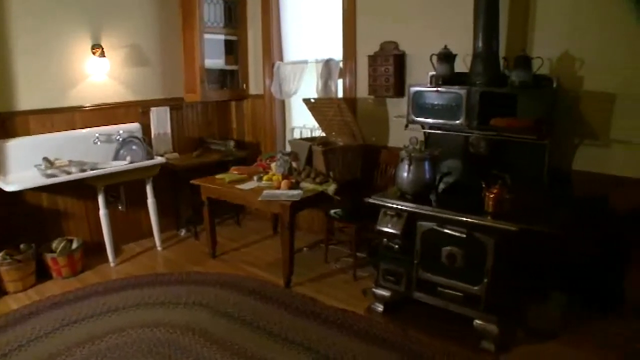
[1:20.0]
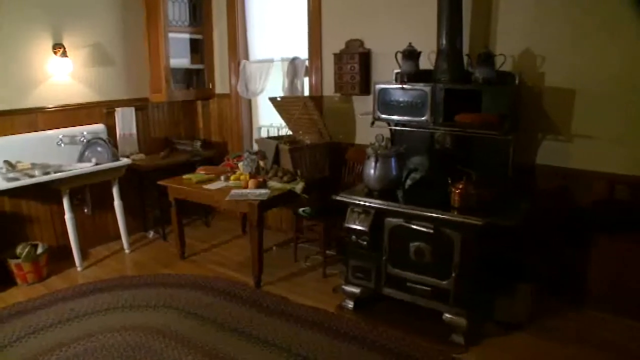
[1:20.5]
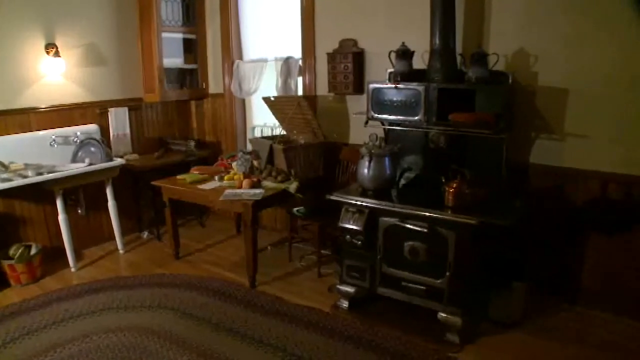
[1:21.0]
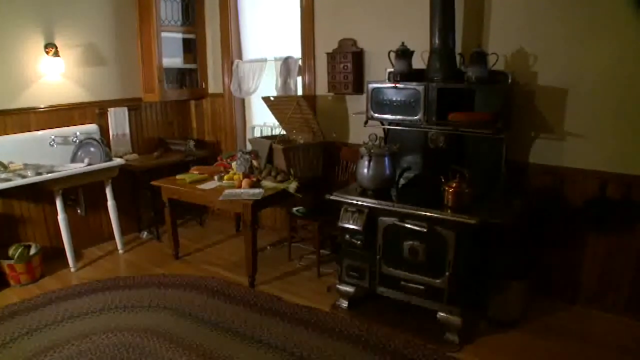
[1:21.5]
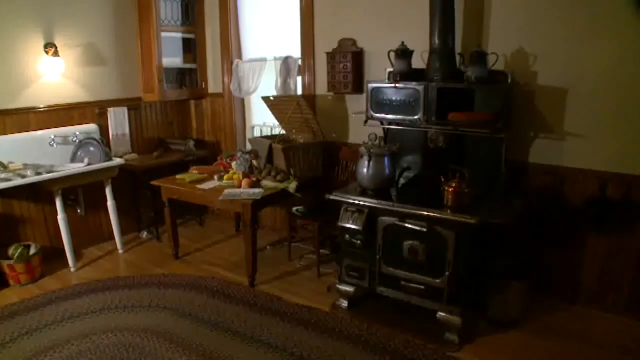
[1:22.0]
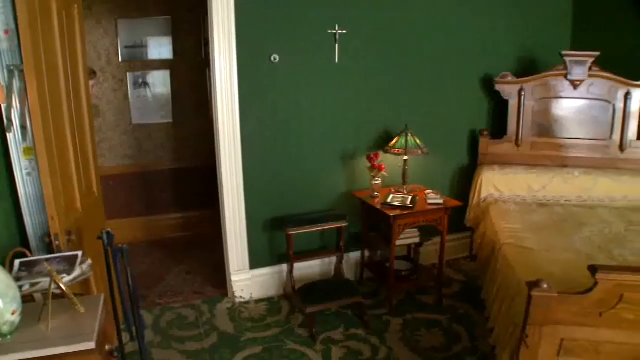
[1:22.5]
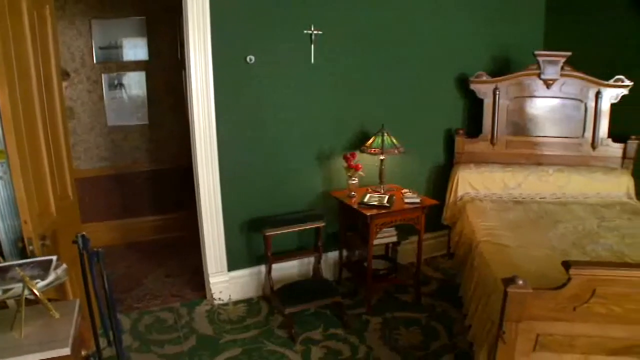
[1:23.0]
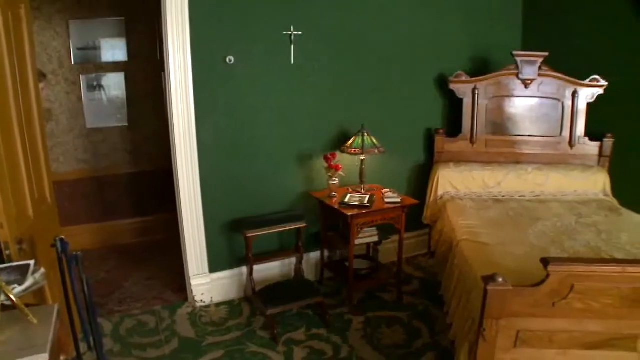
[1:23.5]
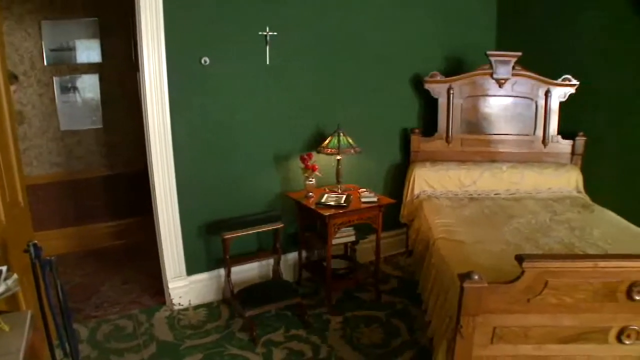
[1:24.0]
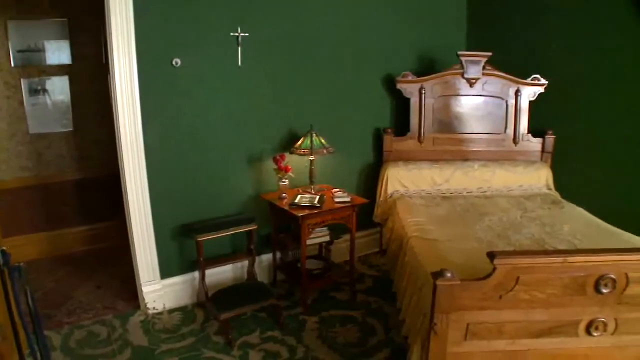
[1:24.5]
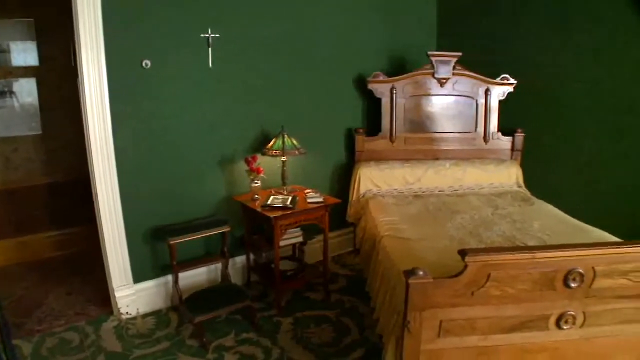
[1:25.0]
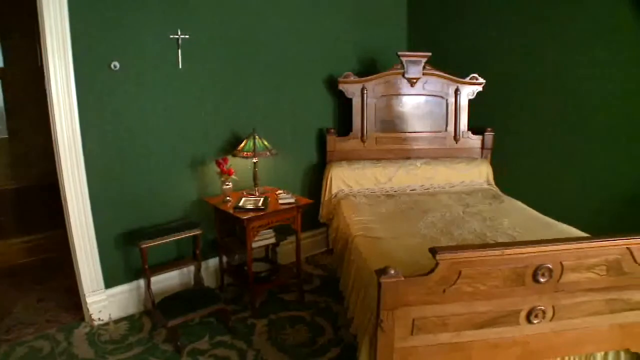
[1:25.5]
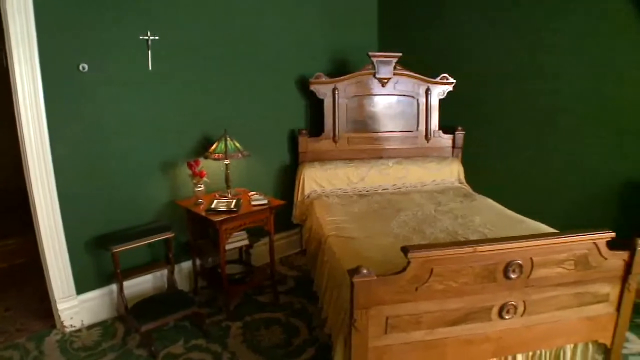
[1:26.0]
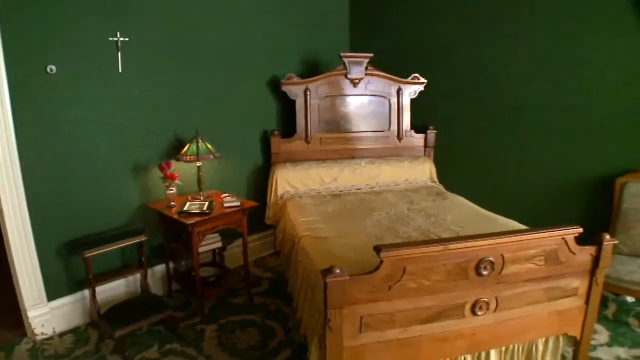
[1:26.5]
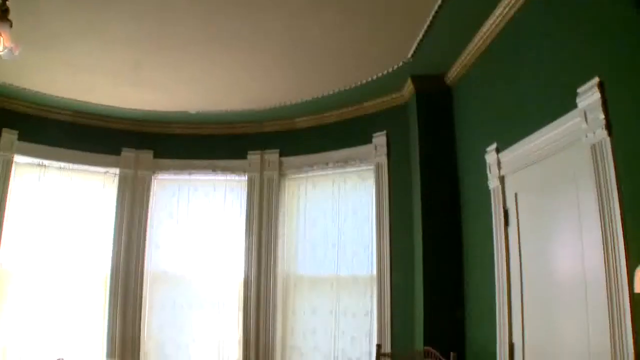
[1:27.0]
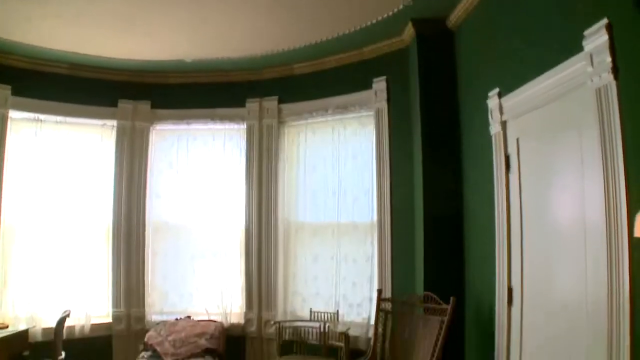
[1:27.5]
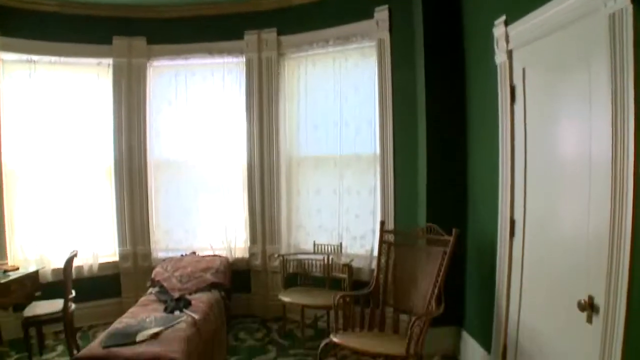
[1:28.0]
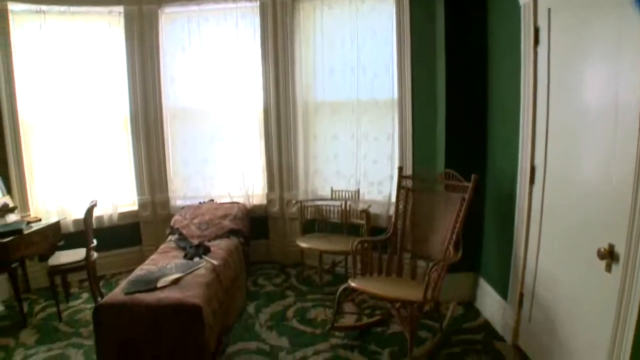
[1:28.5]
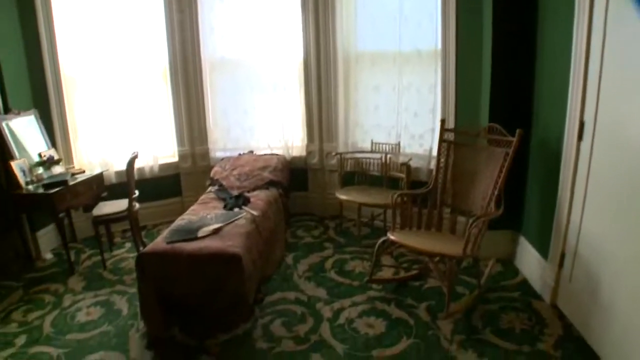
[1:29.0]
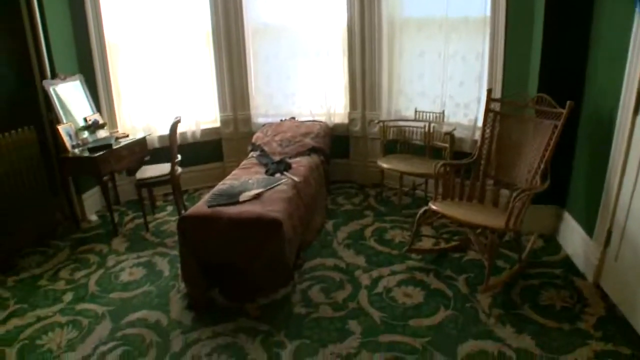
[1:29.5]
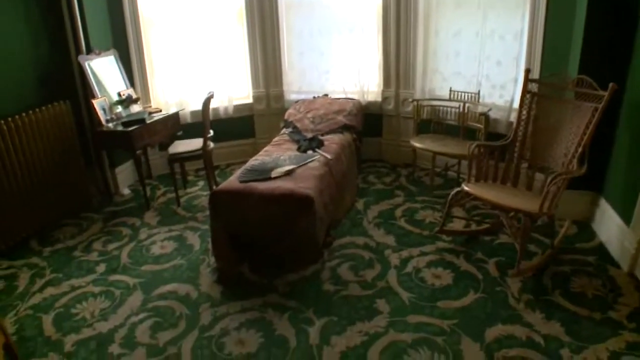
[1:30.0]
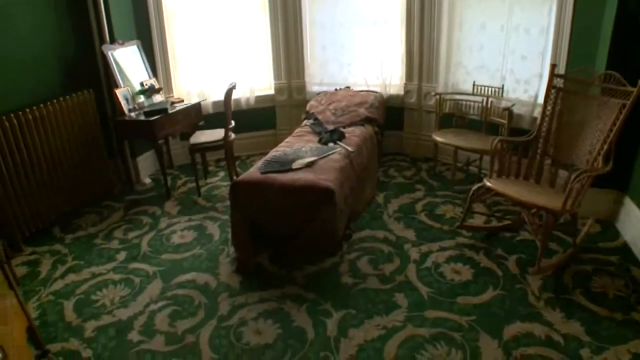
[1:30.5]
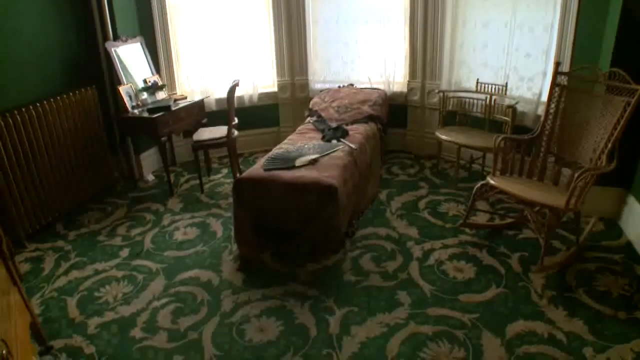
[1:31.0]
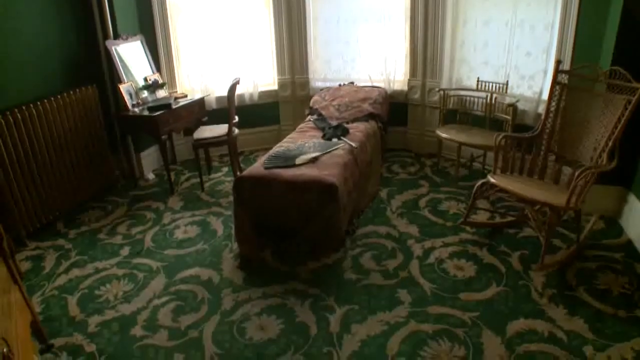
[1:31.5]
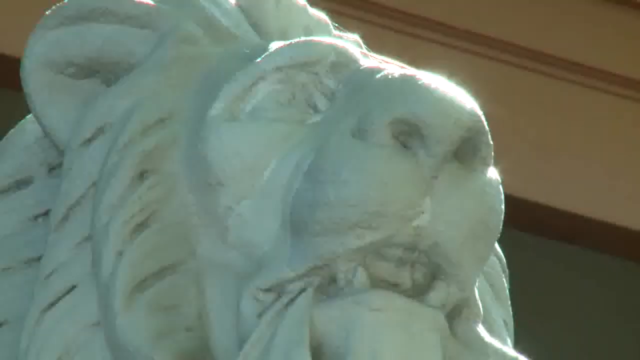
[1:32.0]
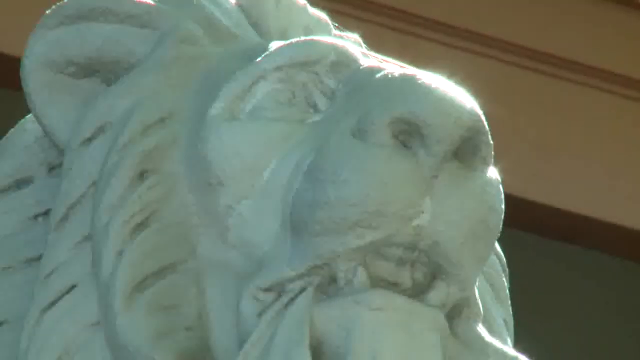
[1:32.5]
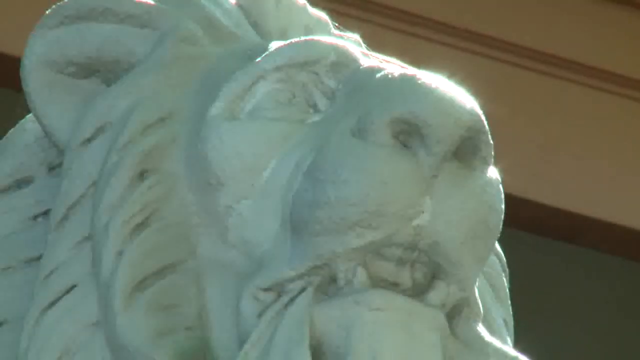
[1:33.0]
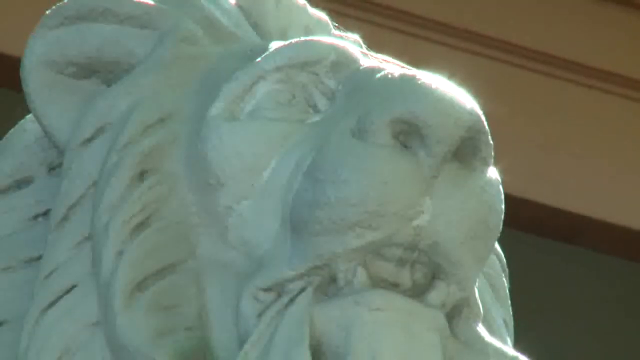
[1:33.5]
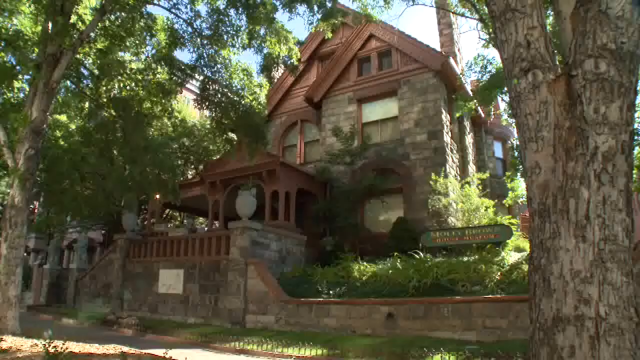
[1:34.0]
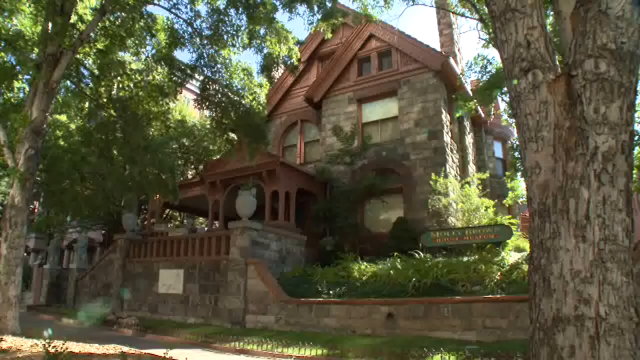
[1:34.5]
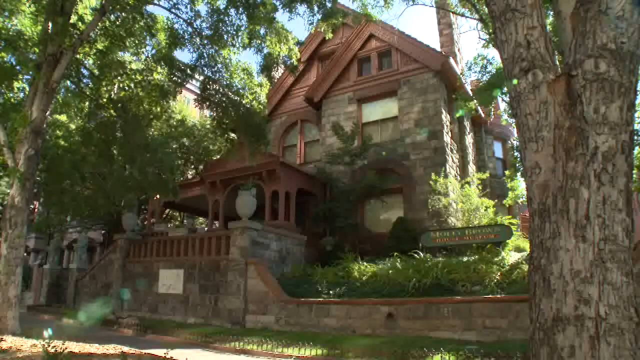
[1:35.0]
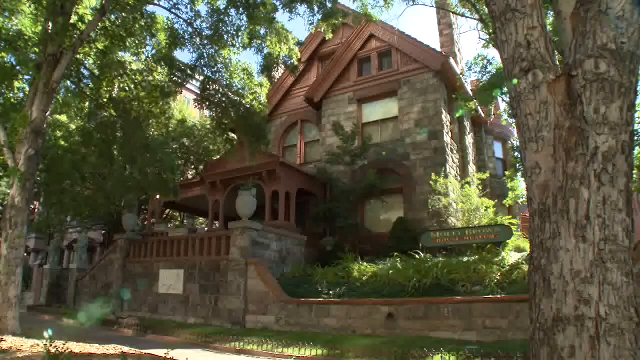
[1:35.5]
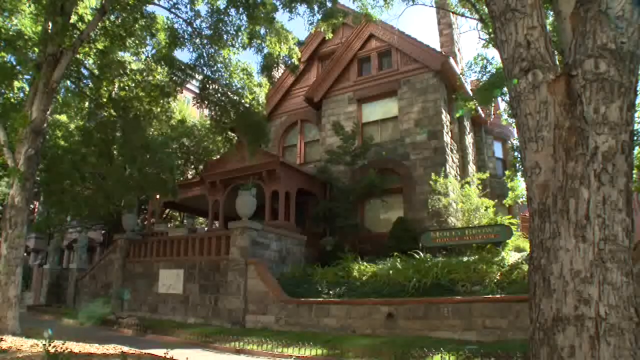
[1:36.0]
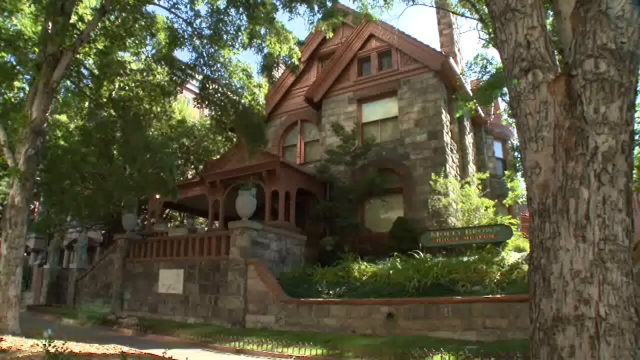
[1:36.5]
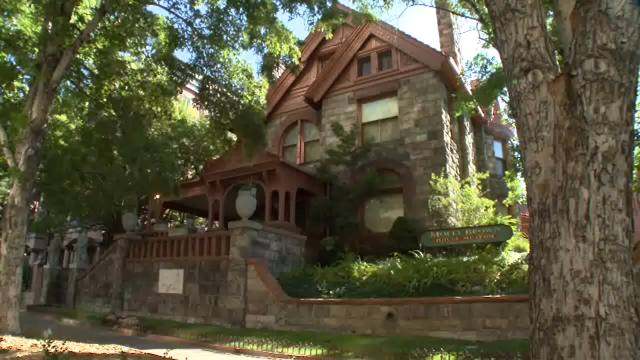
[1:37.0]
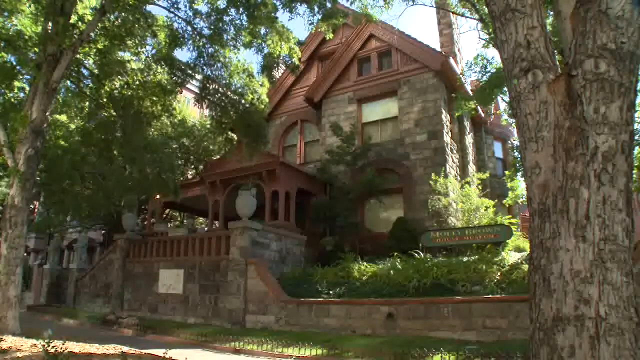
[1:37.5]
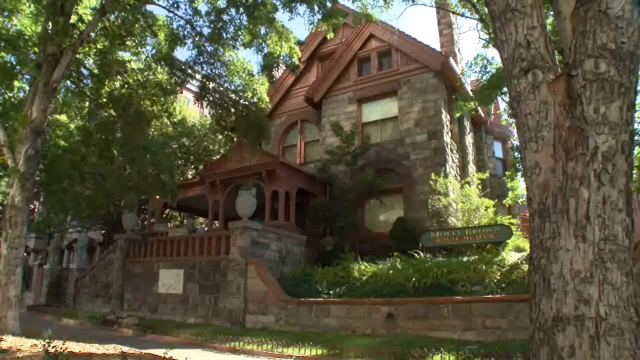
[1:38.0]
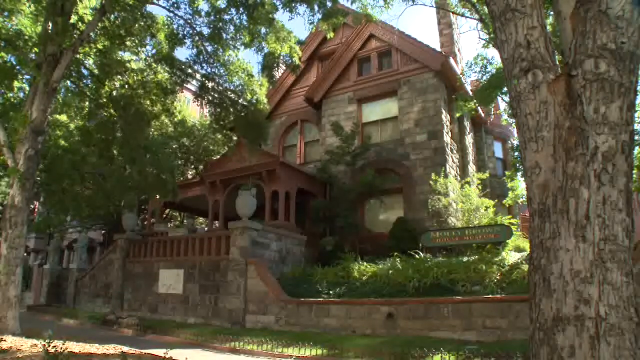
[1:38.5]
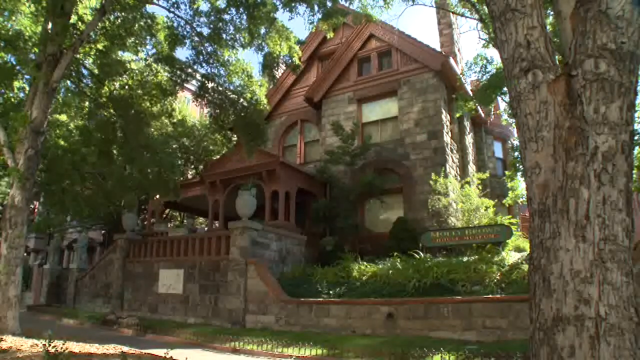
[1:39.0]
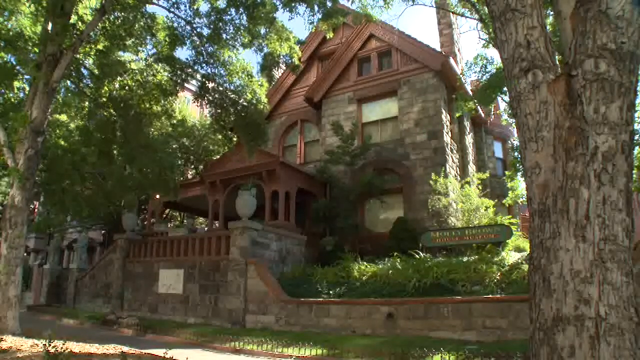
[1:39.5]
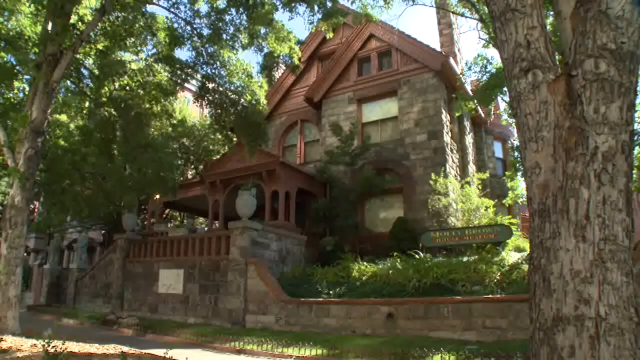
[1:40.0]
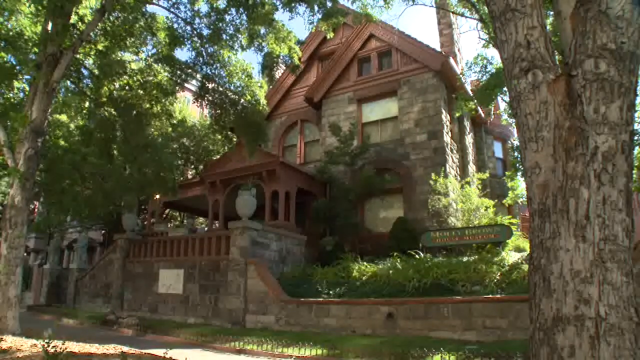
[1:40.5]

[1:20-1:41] A forest green room has large windows and a matching rug. Ornamental lion statues are outside the home. The home is on a lot with a brick fence made of the same brick or stone used on the house. A picture of Molly Brown is shown, along with something showing that she was part of the christening of the Titanic. The library, the lion statues, the masonry work on the house, the tin roof and the wooden staircase are shown.